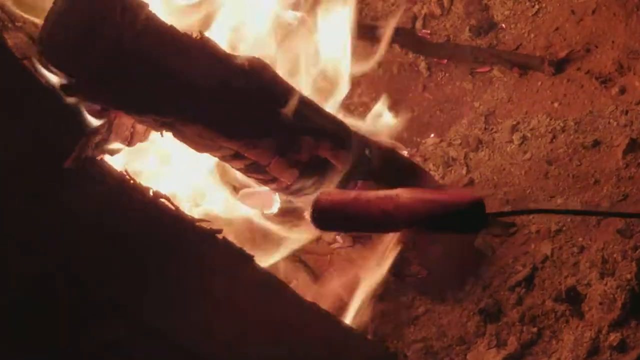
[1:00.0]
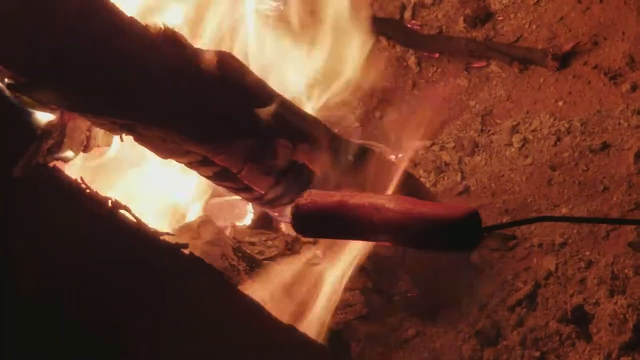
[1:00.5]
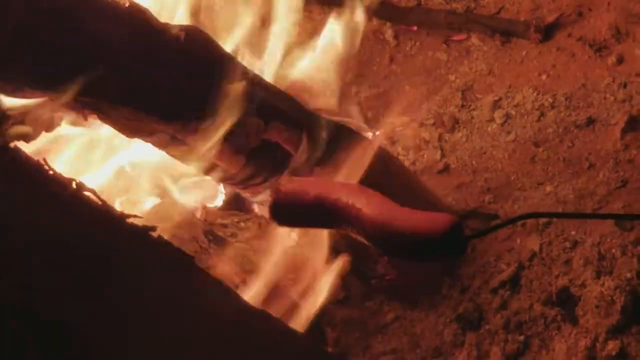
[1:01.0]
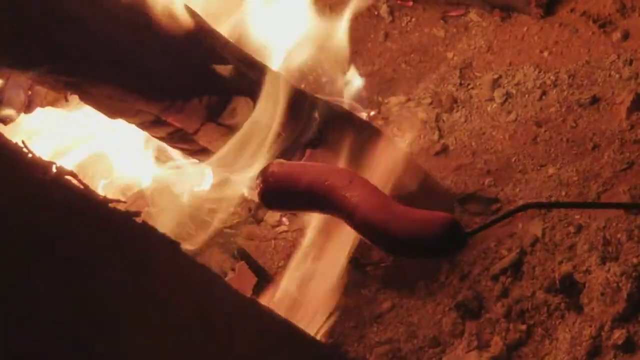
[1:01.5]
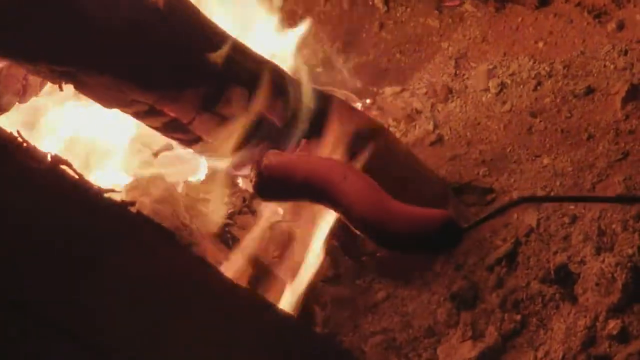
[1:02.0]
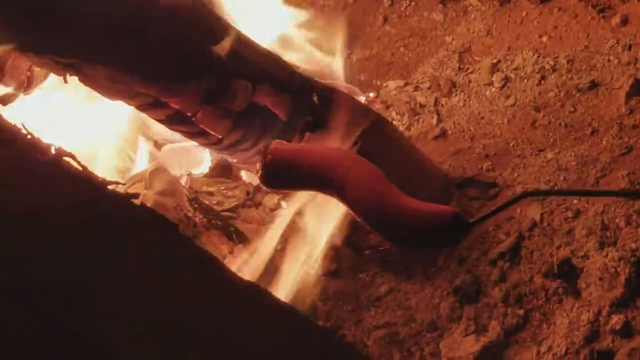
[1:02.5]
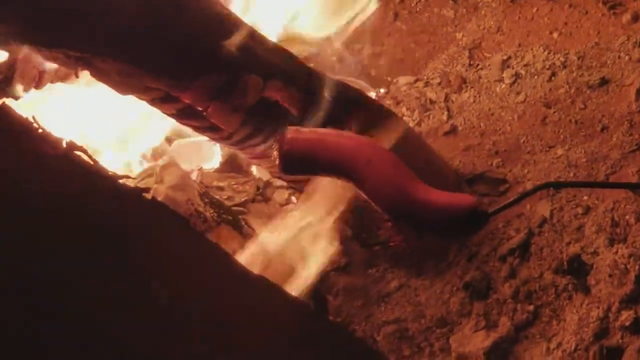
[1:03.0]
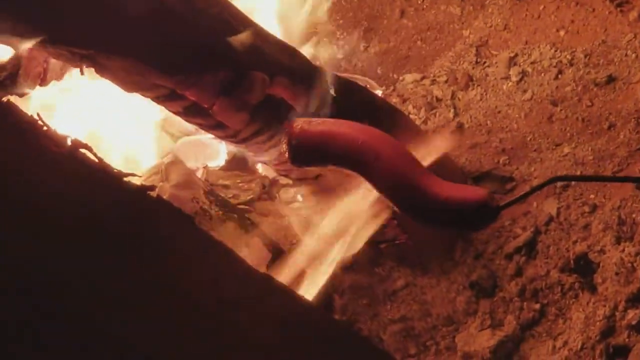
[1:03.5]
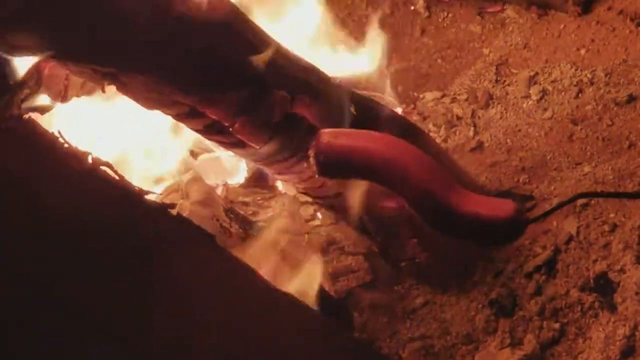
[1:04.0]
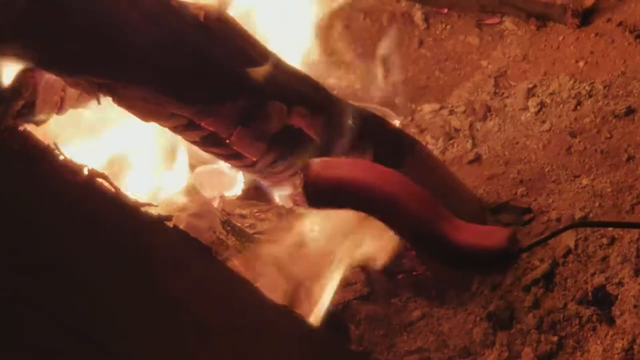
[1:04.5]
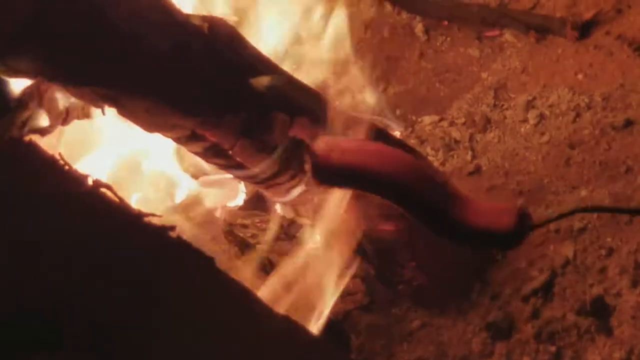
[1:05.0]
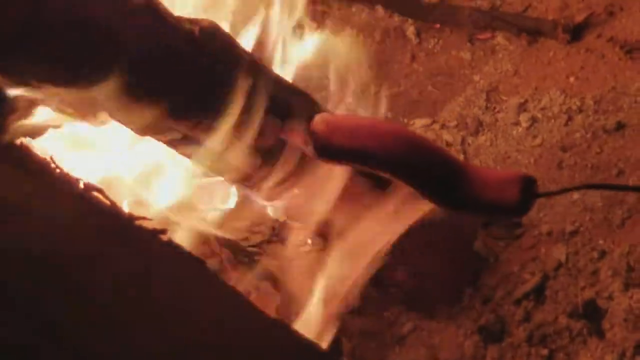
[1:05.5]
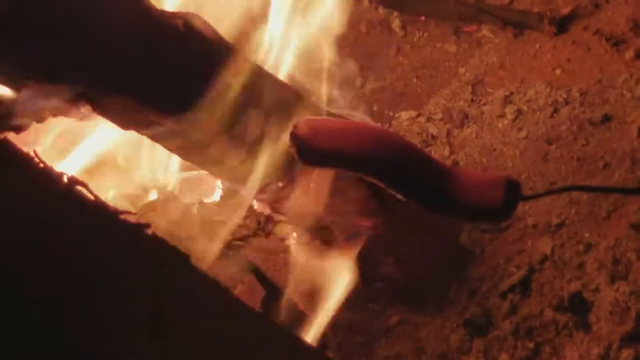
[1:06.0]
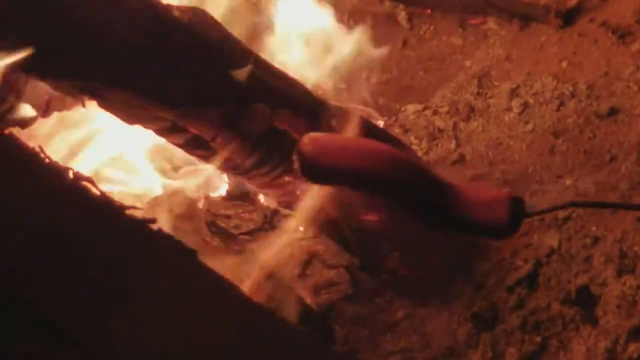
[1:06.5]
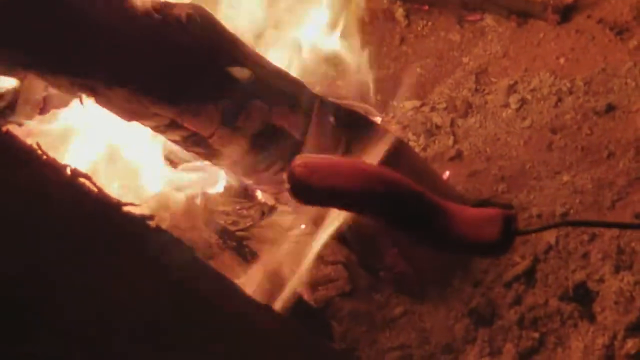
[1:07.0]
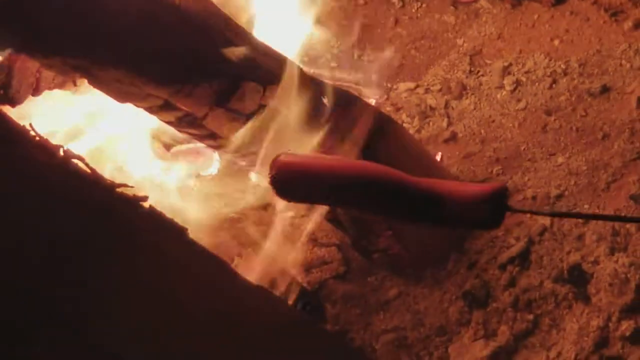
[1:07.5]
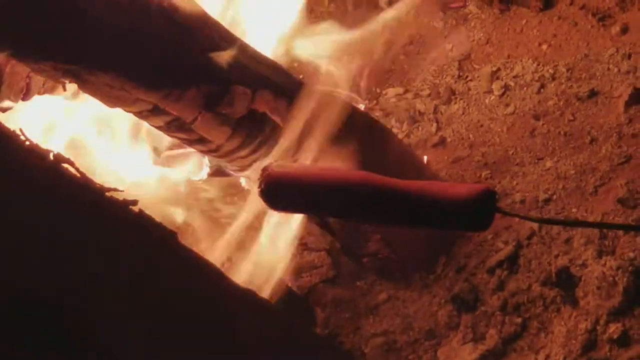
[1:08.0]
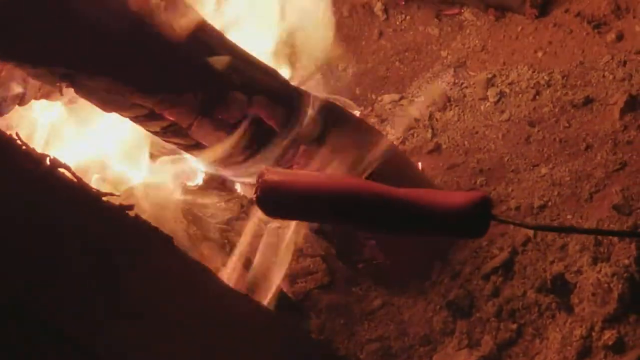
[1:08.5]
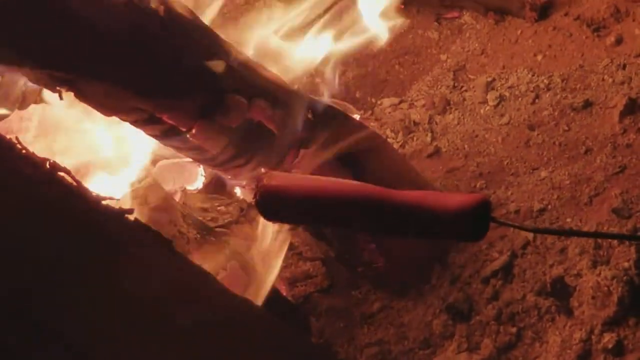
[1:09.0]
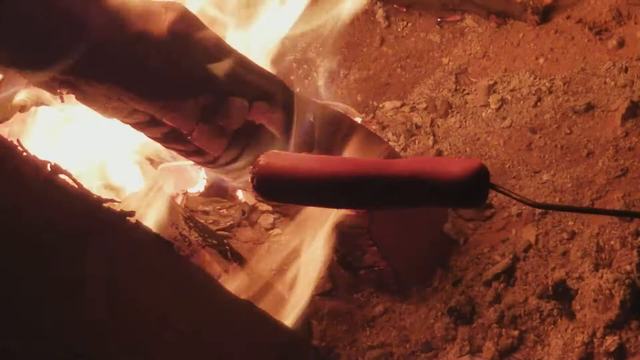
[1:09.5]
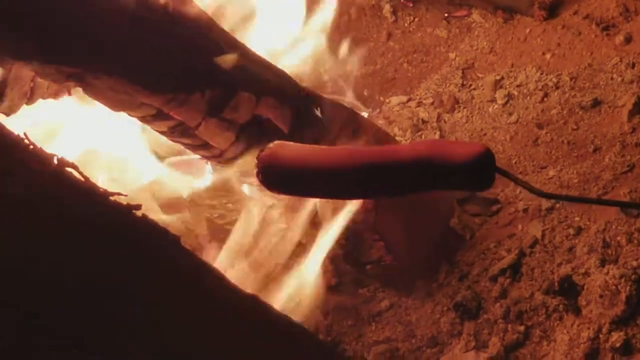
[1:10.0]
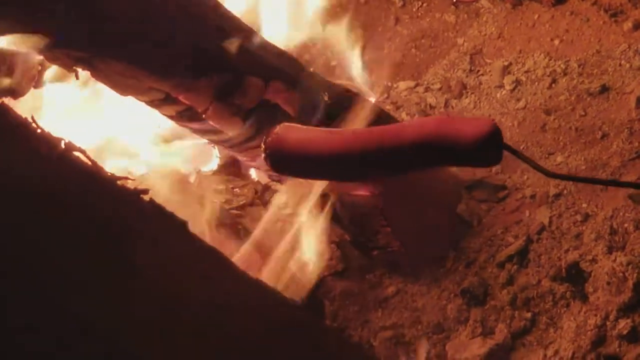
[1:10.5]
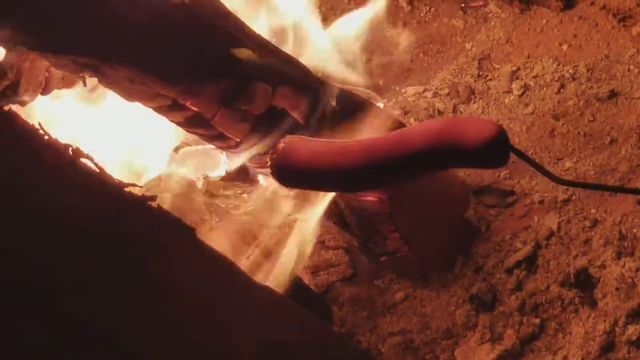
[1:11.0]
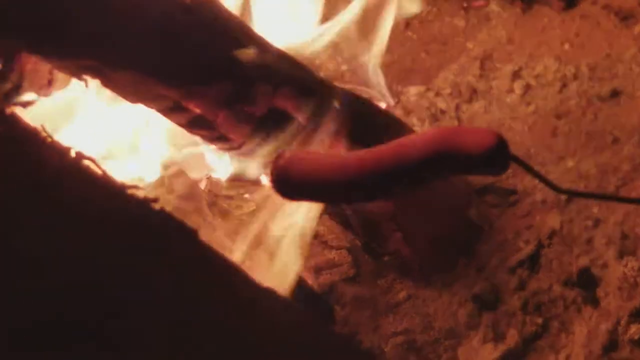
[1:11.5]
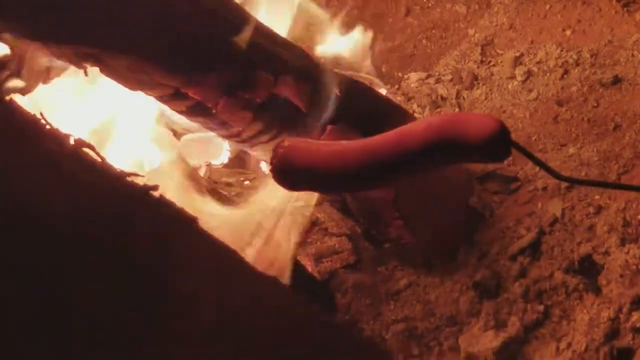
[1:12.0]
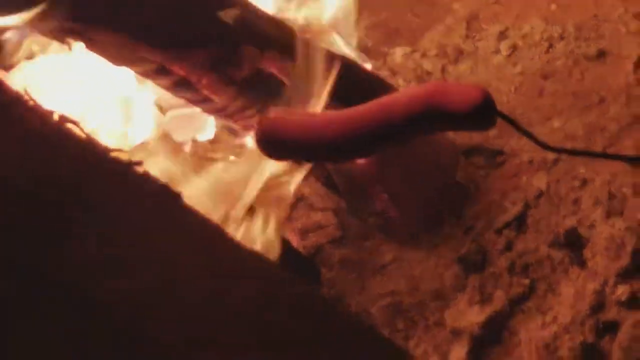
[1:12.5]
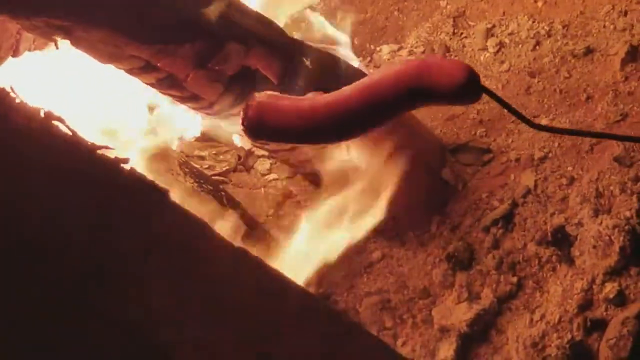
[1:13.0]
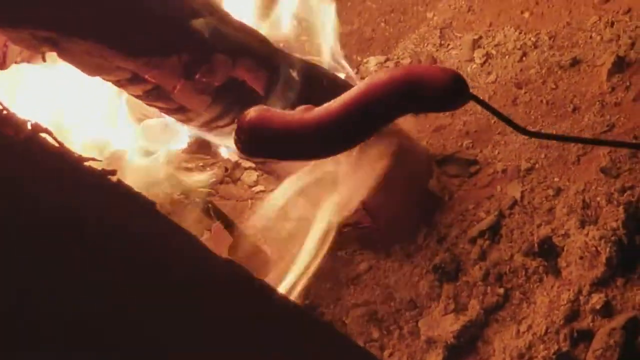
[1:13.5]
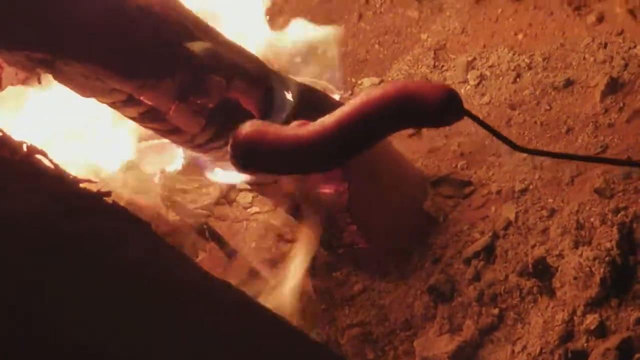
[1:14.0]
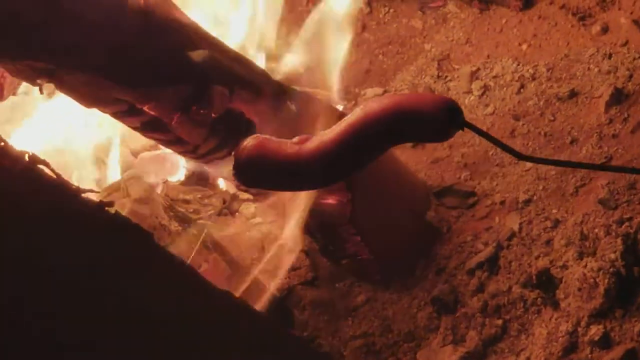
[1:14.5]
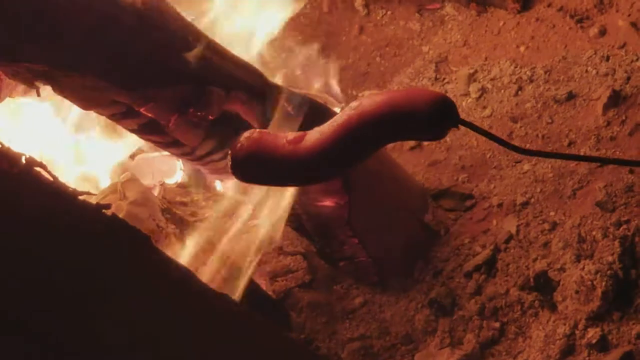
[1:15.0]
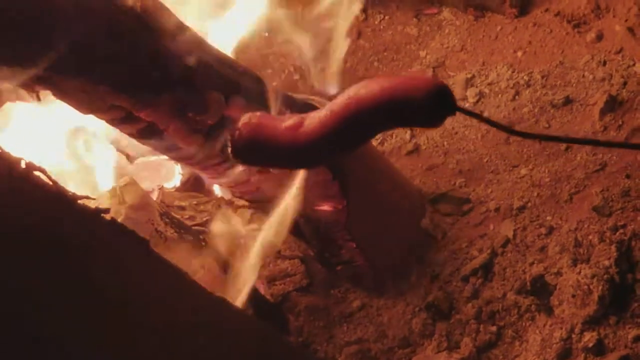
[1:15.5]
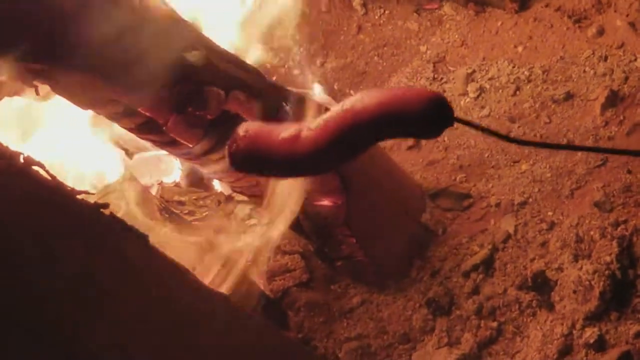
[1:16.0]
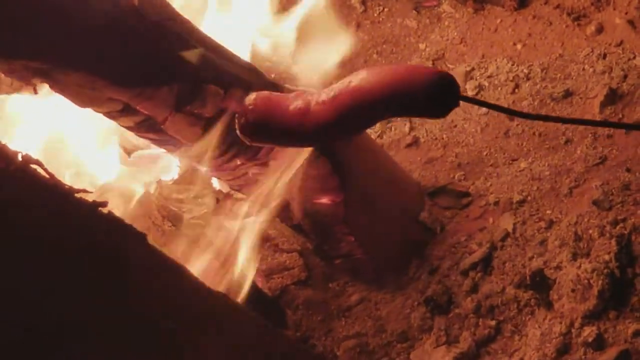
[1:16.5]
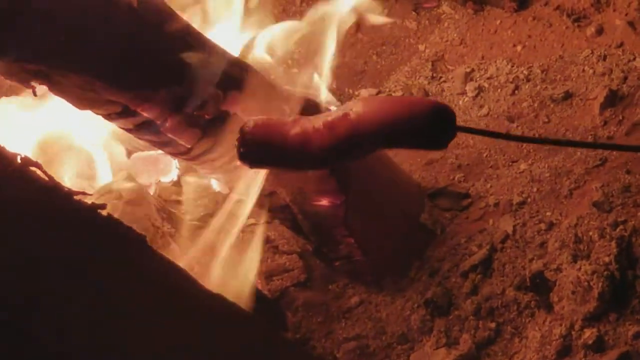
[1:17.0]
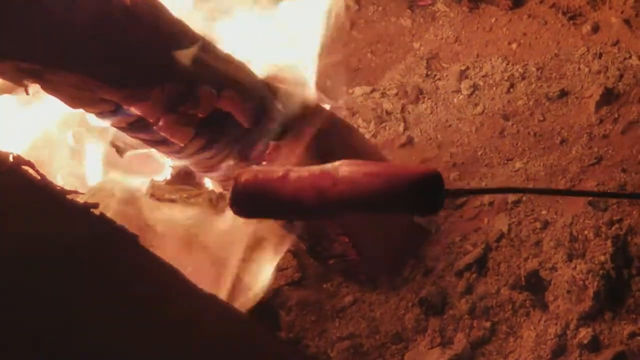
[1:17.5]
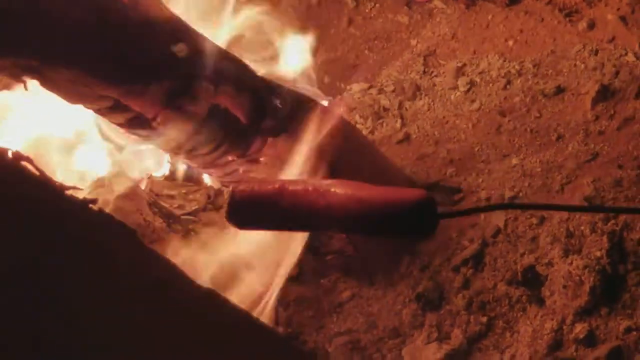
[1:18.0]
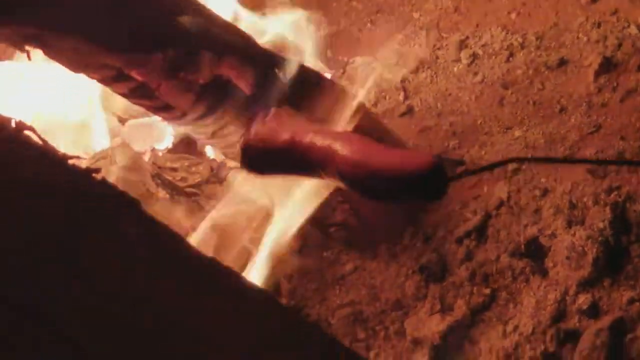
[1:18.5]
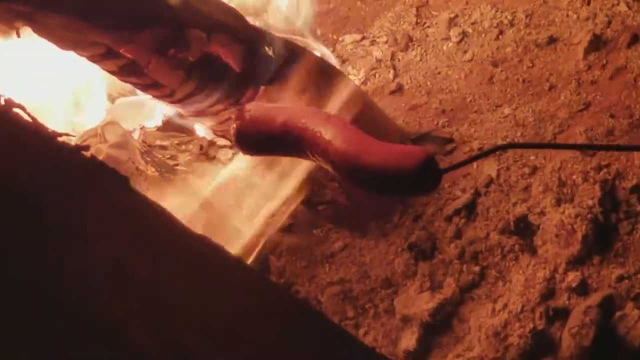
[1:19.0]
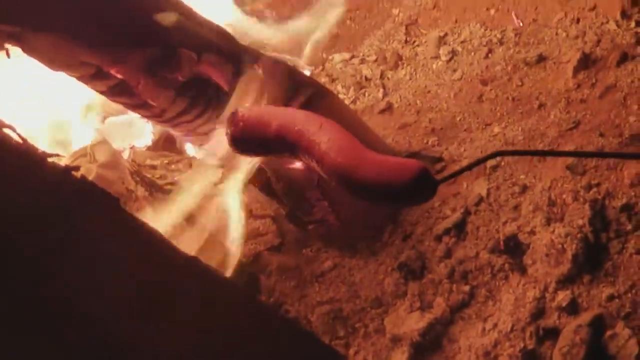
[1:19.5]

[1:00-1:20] The sausage, apparently a Vienna, is shown blinking and changing color. The person keeps turning it, and something like oil comes out of it as it turns. No person appears; only the sausage or Vienna being turned is seen.